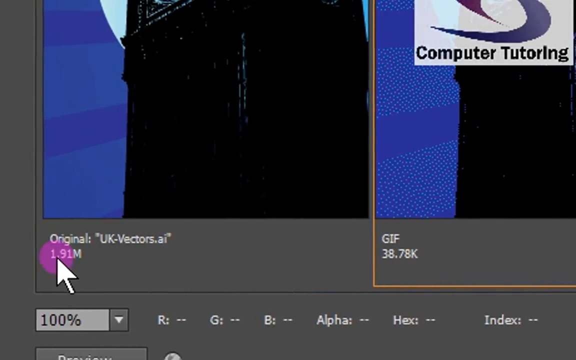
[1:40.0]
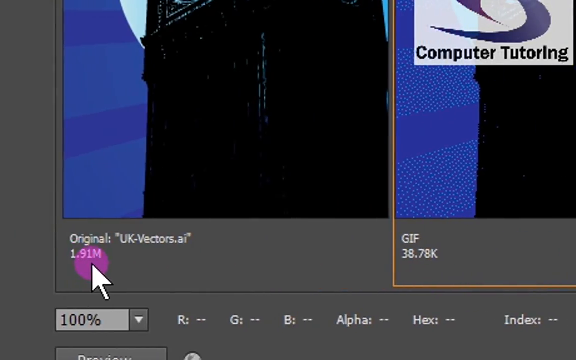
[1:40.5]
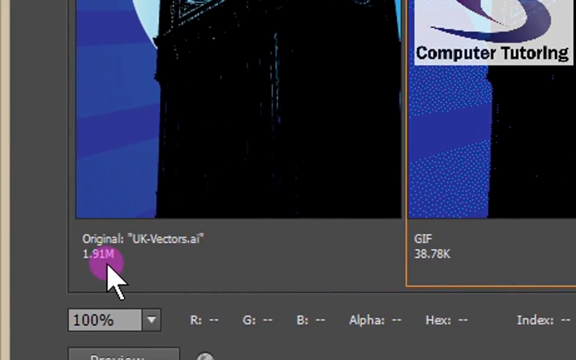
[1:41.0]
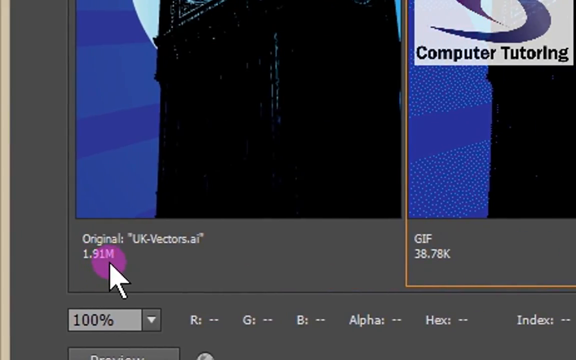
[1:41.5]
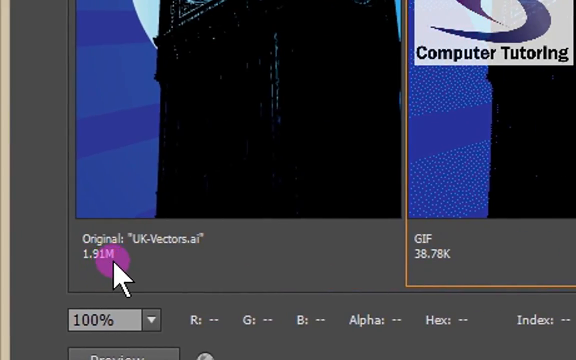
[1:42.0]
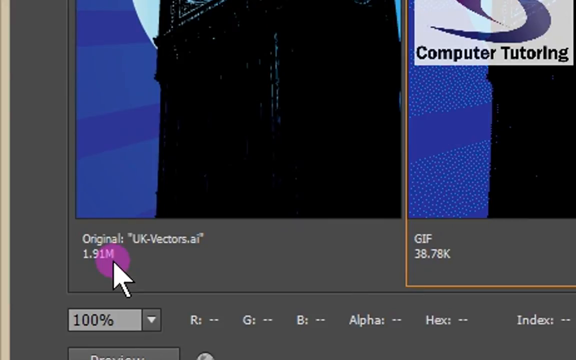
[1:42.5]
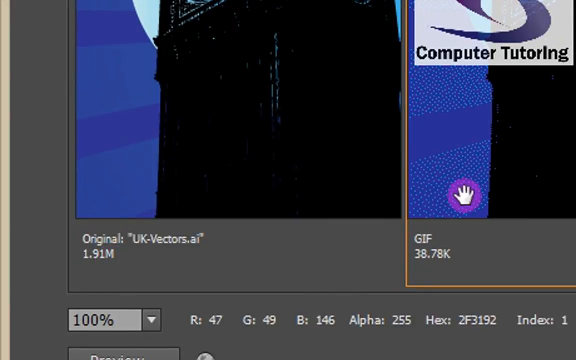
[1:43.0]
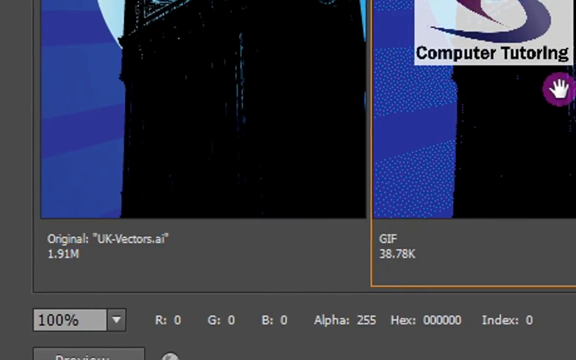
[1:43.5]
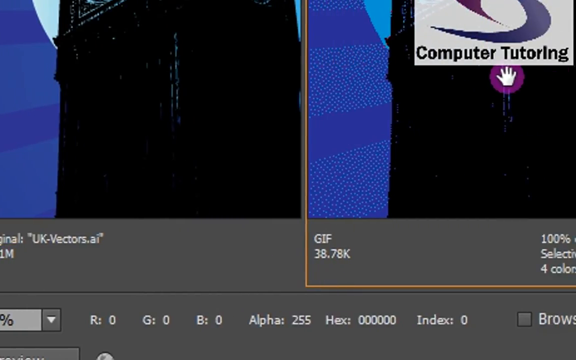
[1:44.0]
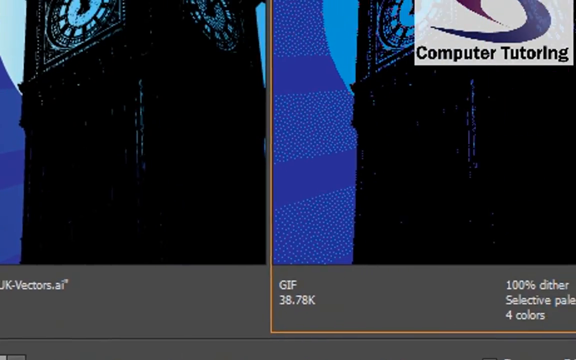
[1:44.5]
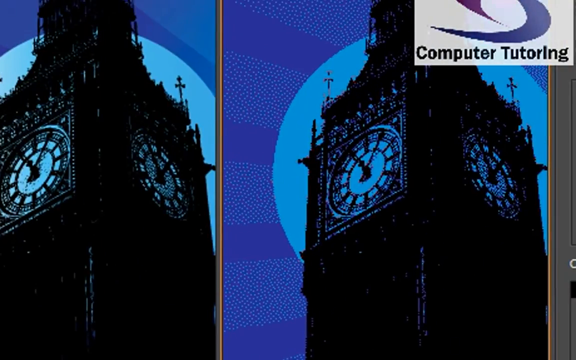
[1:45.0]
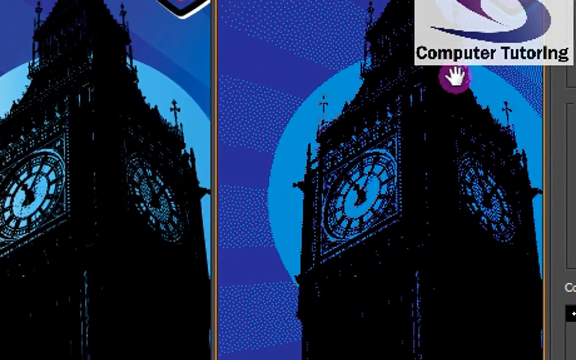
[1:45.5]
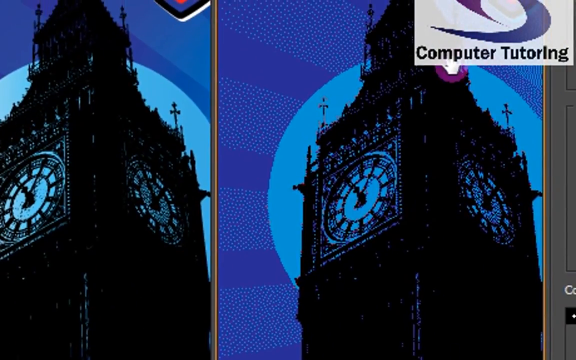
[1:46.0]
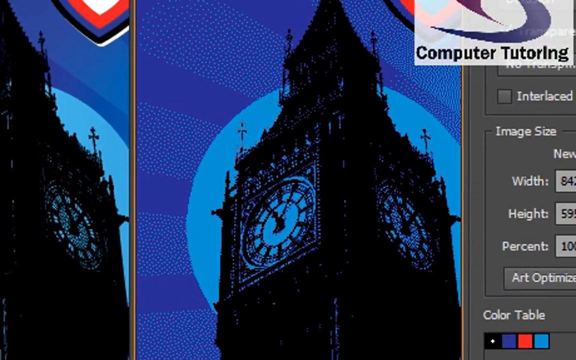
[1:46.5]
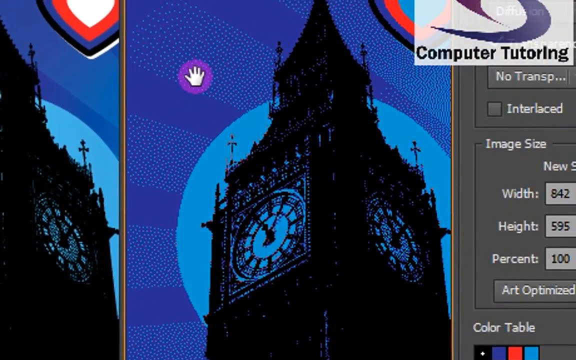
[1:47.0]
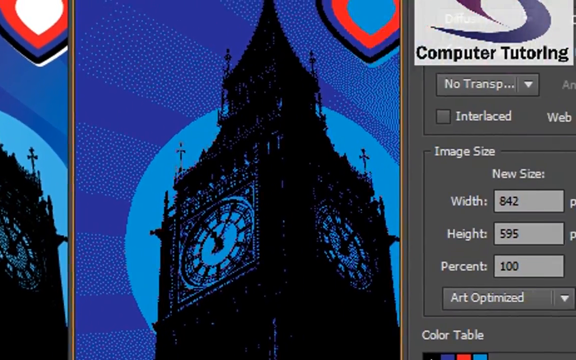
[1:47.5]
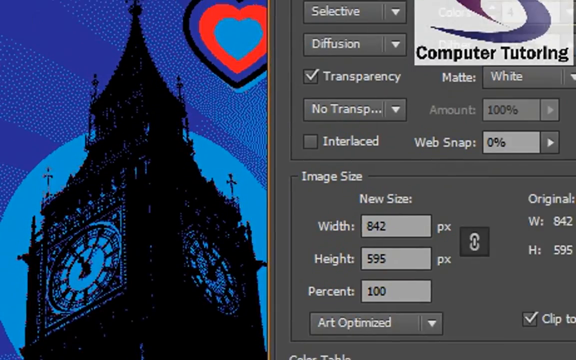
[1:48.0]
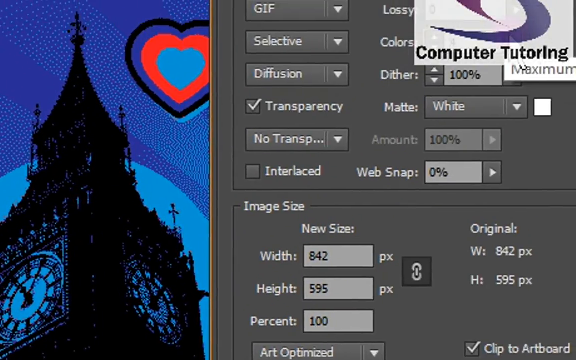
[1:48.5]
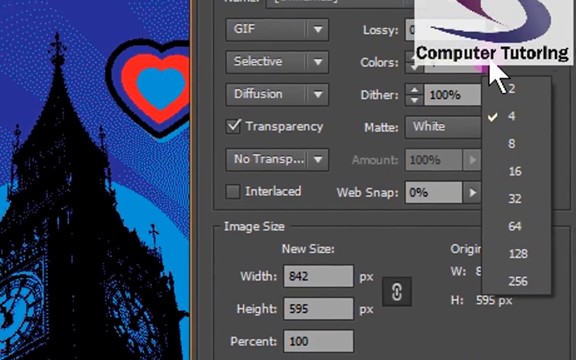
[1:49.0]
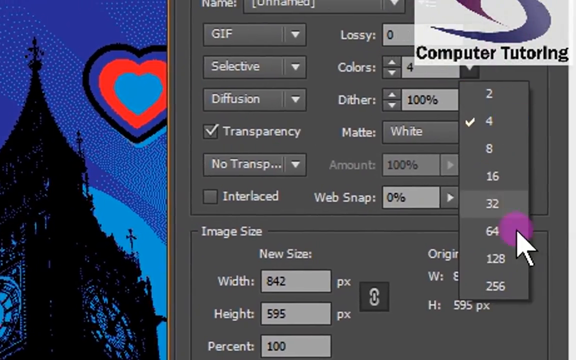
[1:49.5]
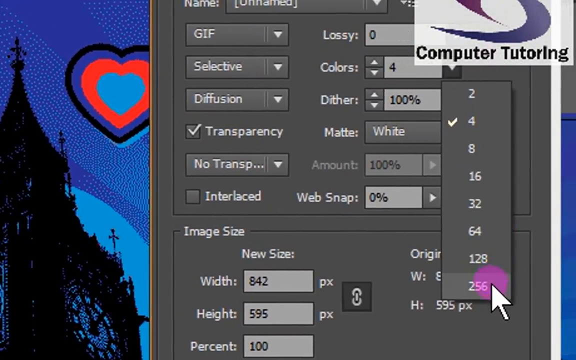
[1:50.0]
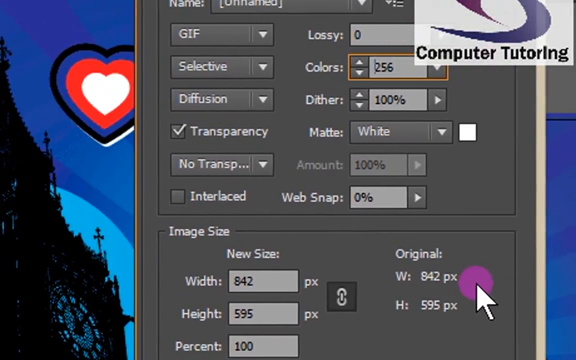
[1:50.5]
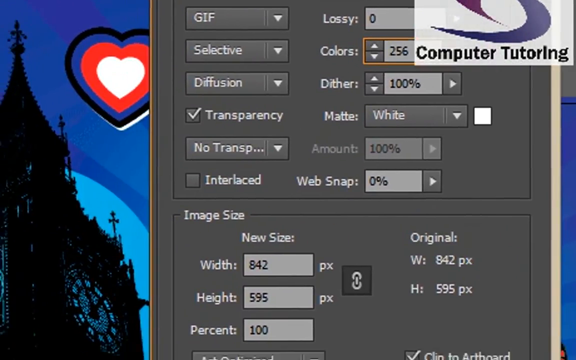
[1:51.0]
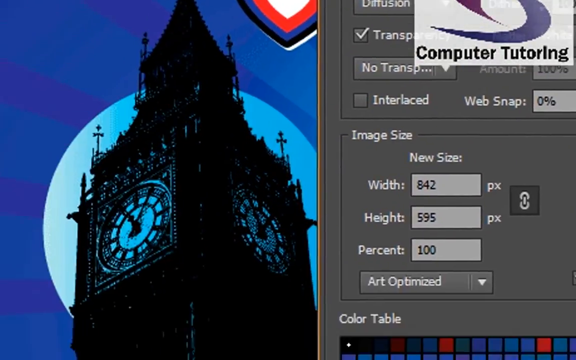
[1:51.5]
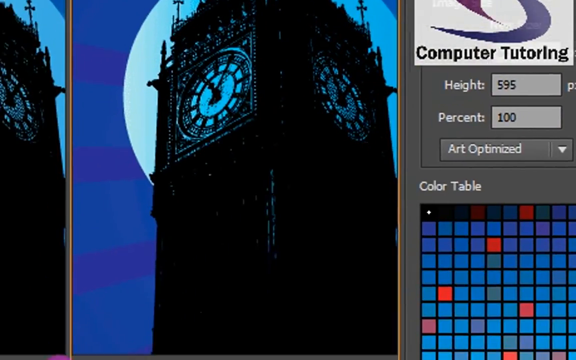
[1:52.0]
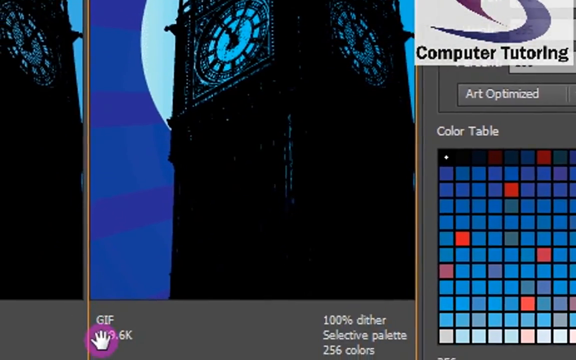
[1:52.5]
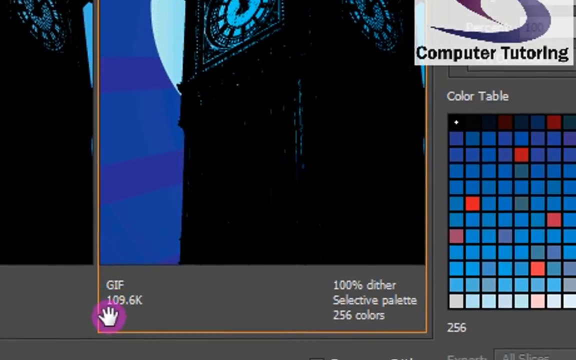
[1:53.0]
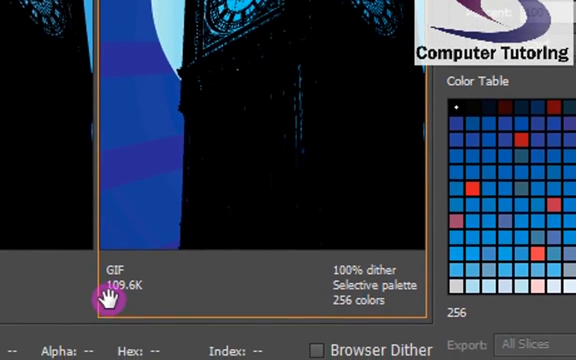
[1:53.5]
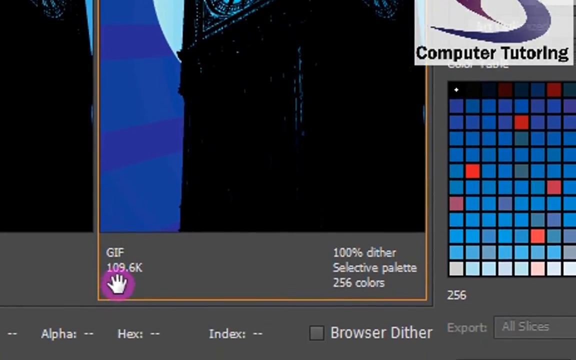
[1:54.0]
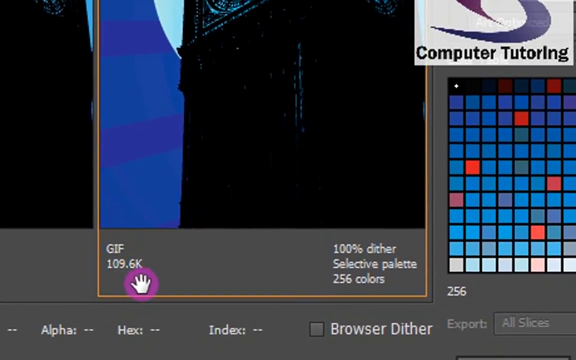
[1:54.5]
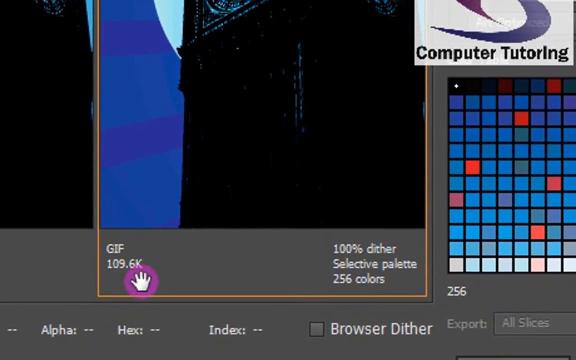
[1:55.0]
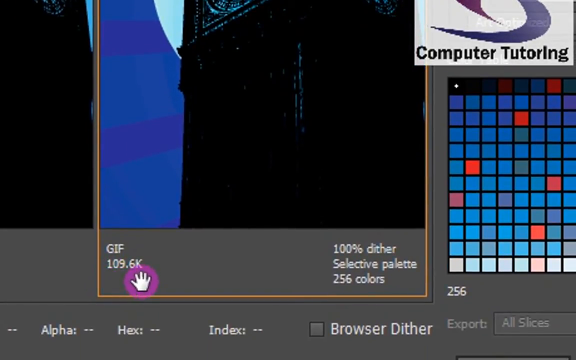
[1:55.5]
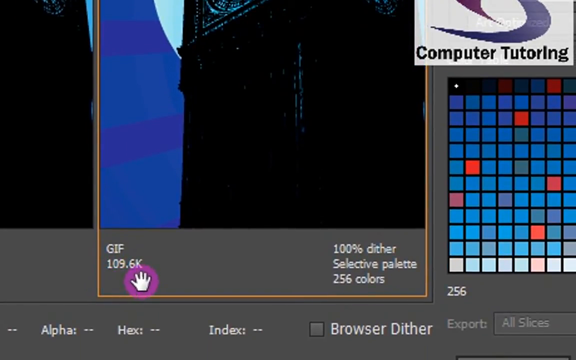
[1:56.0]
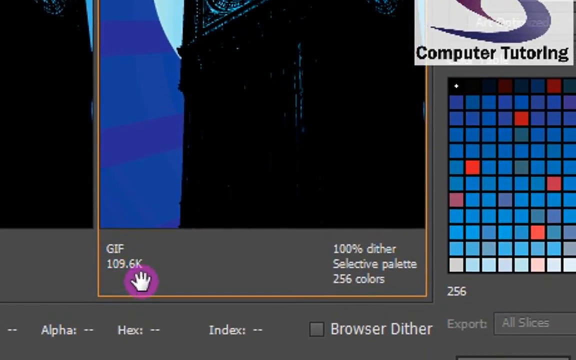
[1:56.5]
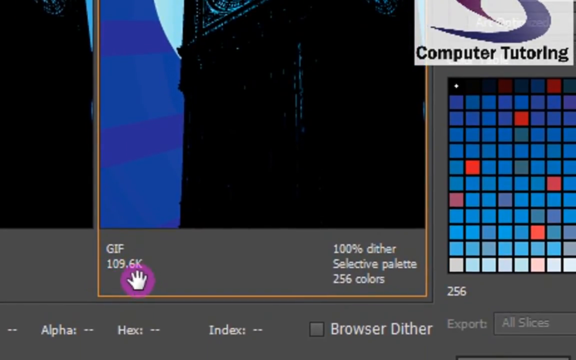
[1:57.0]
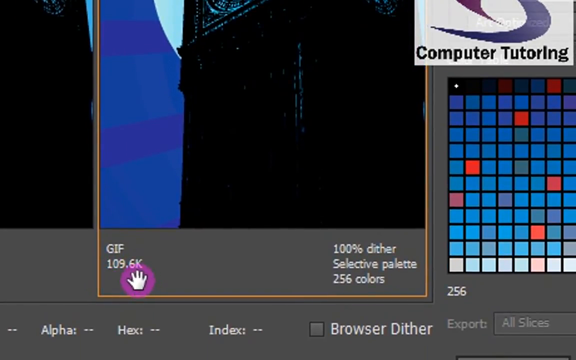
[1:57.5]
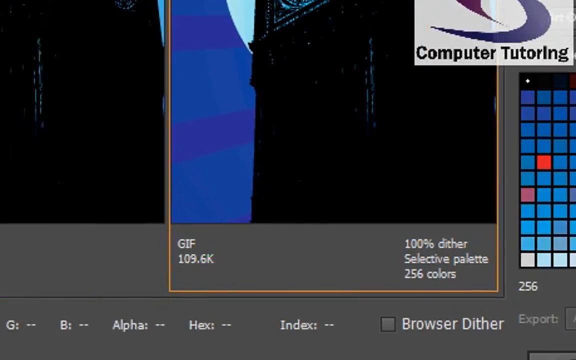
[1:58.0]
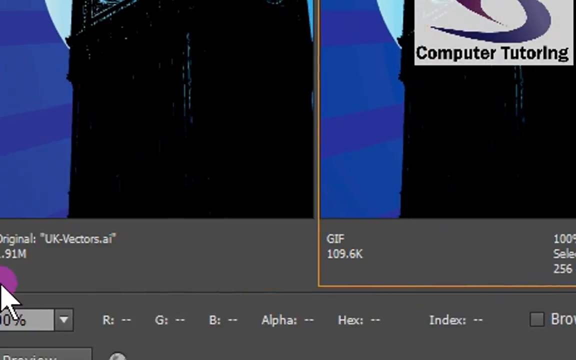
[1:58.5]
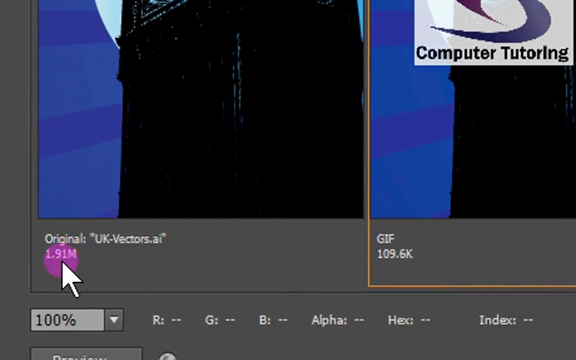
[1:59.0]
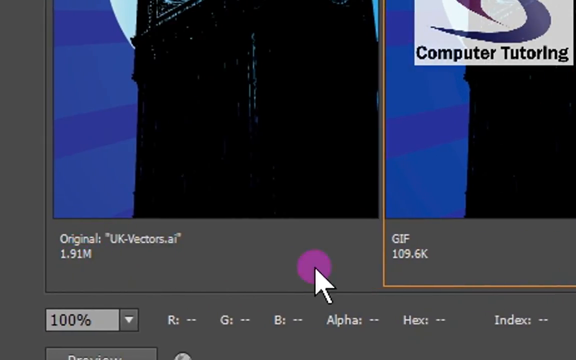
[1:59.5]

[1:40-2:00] A computer tutorial shows the "Computer Tutoring" logo in the right-hand corner. A piece has been cut from a computer-generated picture on a blue background containing Big Ben, a heart, a Union Jack, four stars, a red map that includes the Republic of Ireland, a bobby, a phone box and a double-decker bus. A piece of the Big Ben part has been selected and its margins manipulated. The colors are being adjusted, with a purple circle with a hand hovering over different spots. The cursor goes back to the pull-down menu and changes the color back to 256. At the bottom, the GIF reads "109.6K", and on the right-hand side it reads "100 percent dither", "selective palette", "256 colors". The hand moves to the left, where it reads "original: "UK-vectors.ai"" and "1.91M".